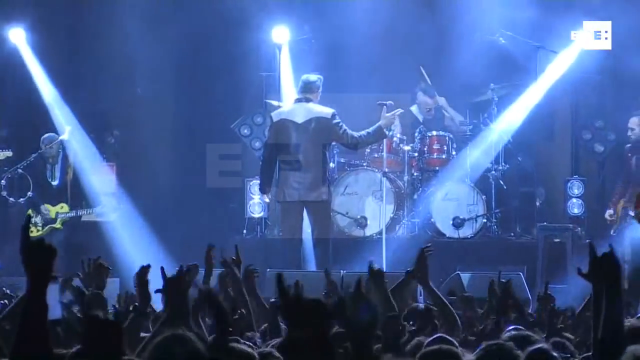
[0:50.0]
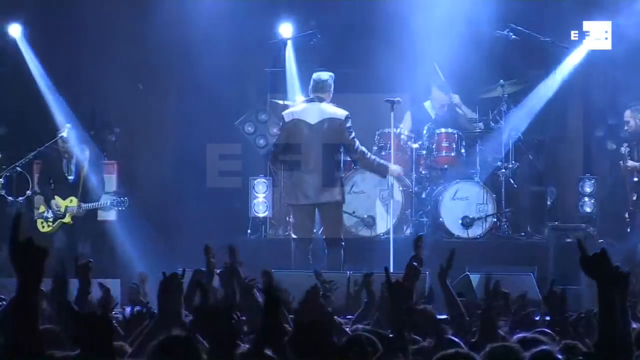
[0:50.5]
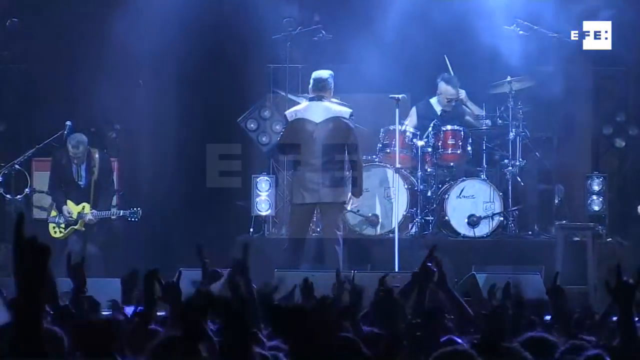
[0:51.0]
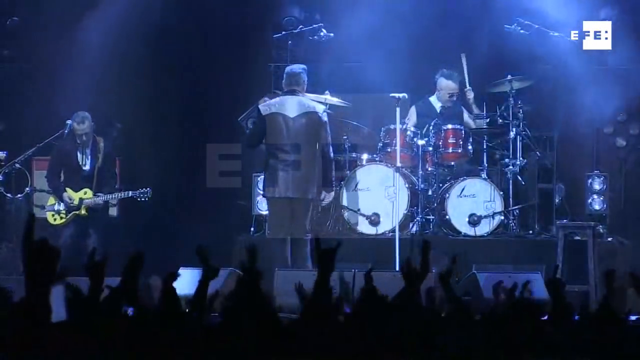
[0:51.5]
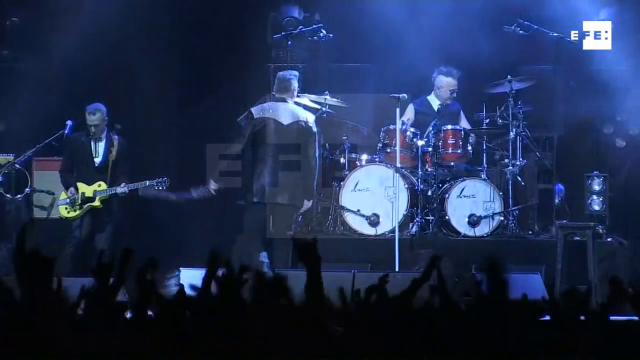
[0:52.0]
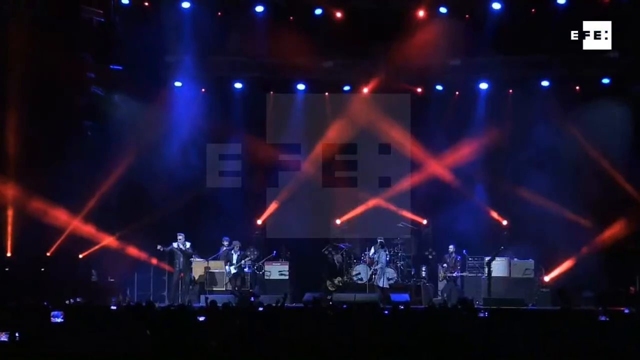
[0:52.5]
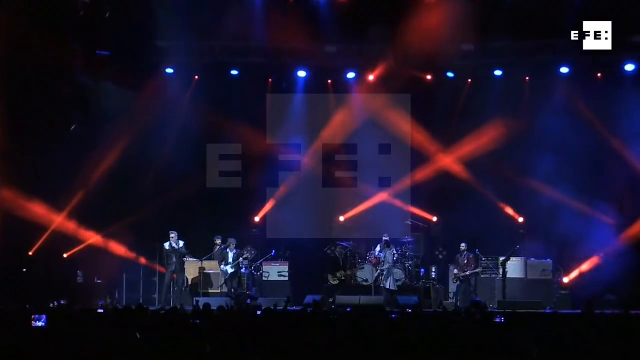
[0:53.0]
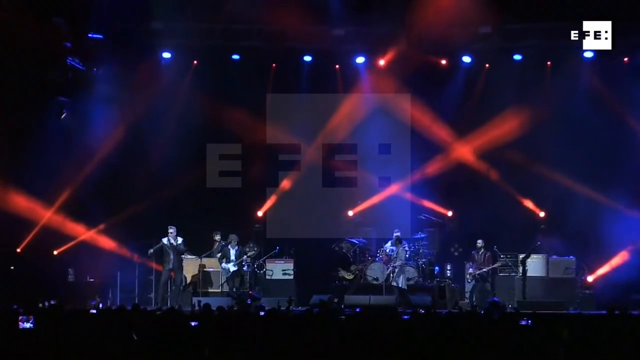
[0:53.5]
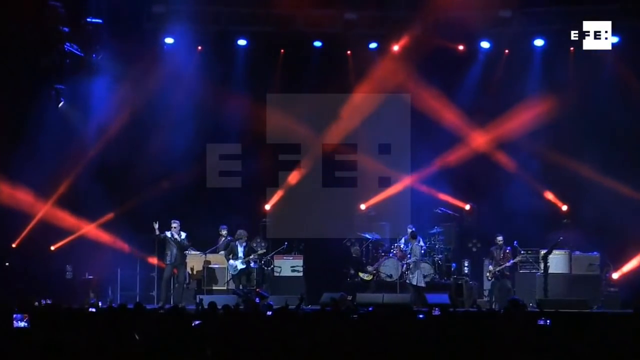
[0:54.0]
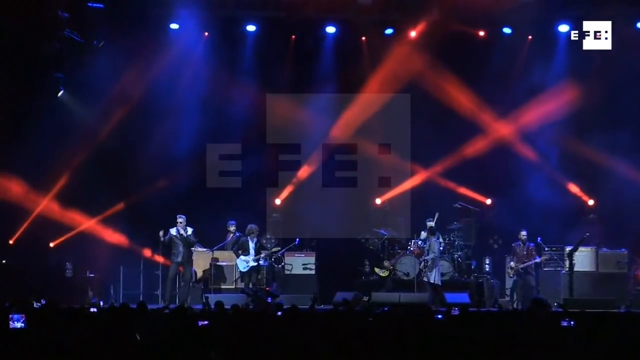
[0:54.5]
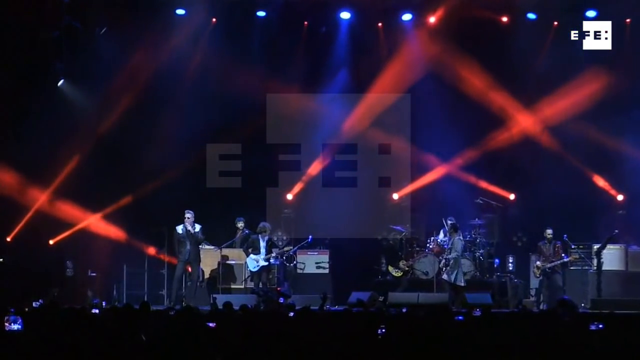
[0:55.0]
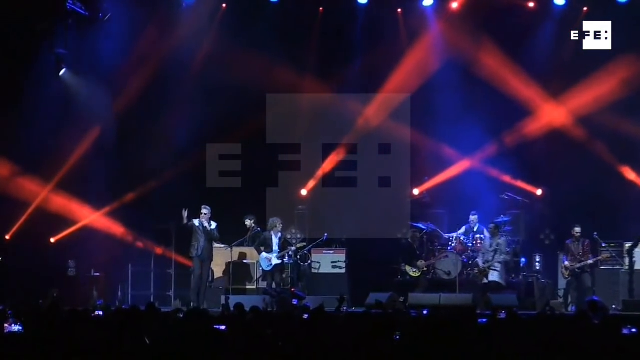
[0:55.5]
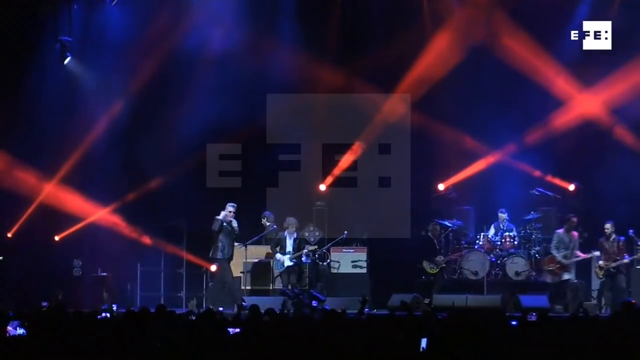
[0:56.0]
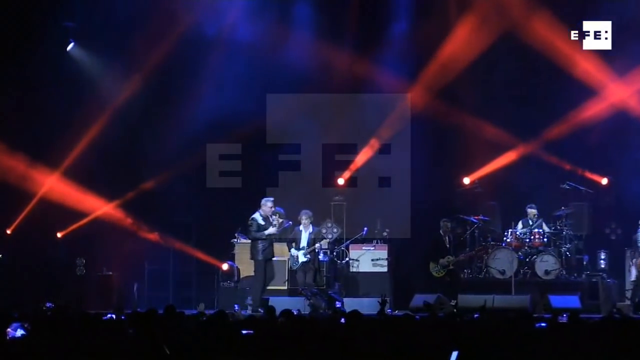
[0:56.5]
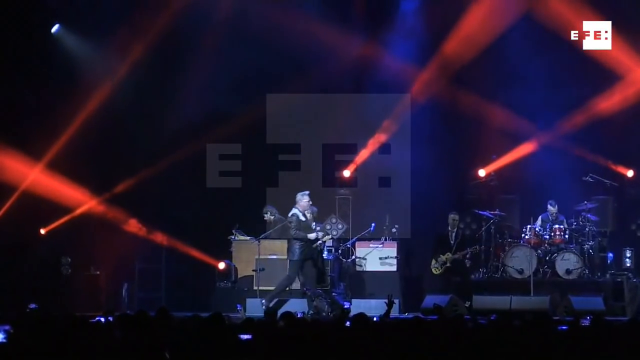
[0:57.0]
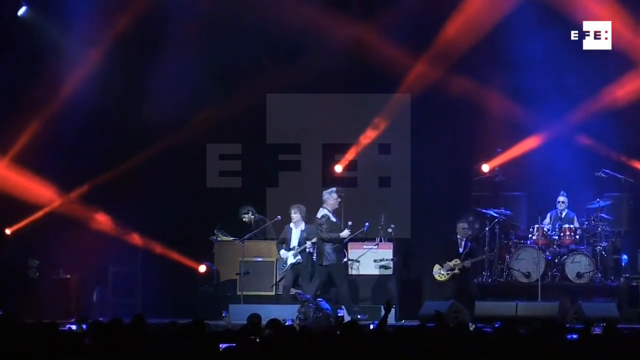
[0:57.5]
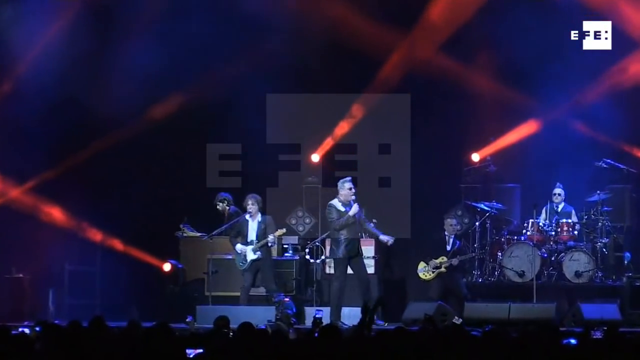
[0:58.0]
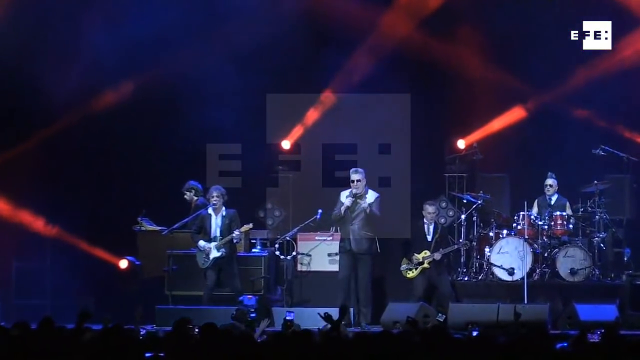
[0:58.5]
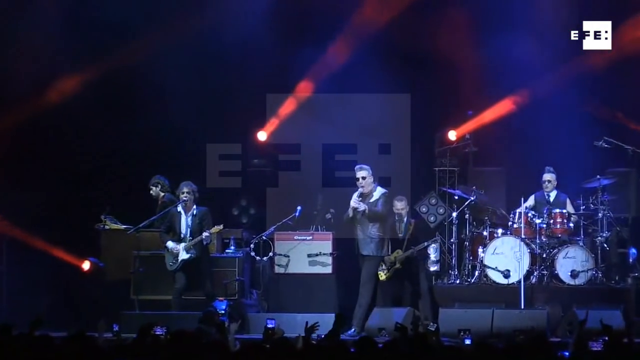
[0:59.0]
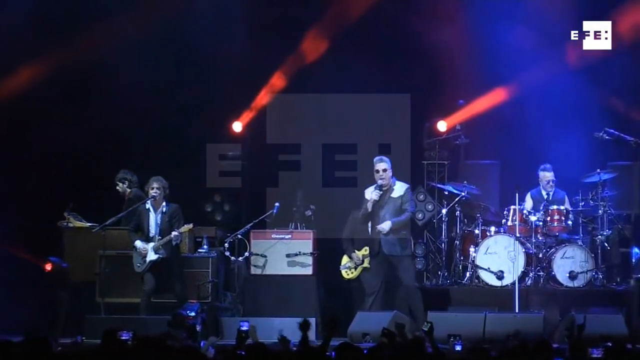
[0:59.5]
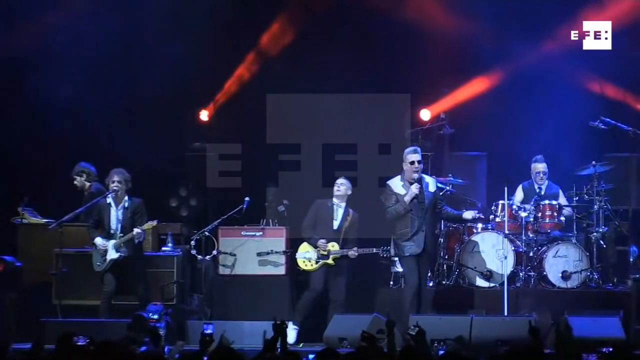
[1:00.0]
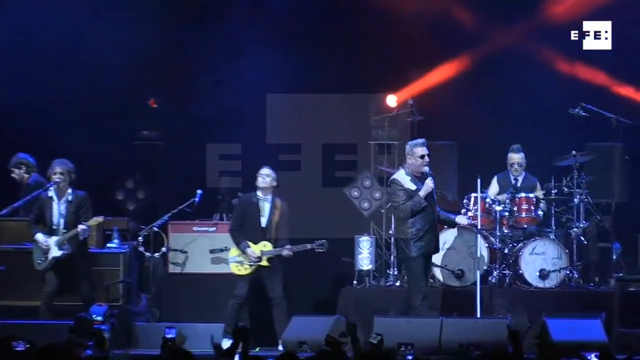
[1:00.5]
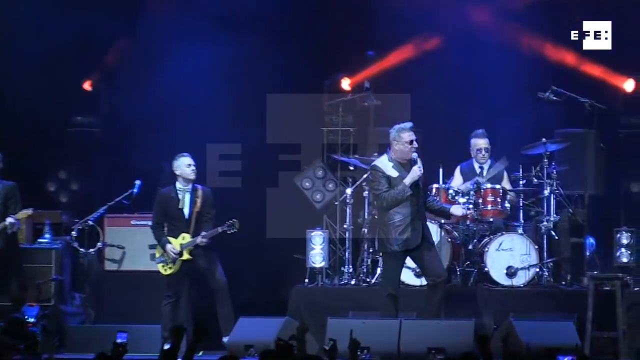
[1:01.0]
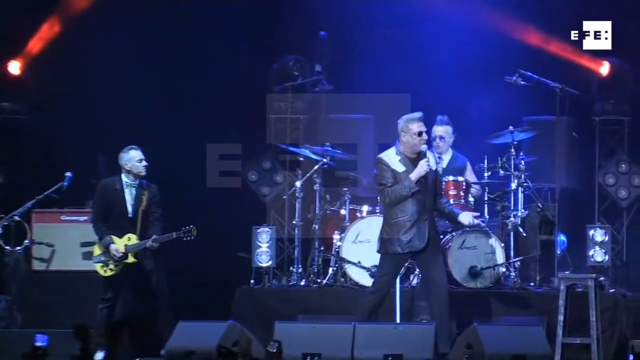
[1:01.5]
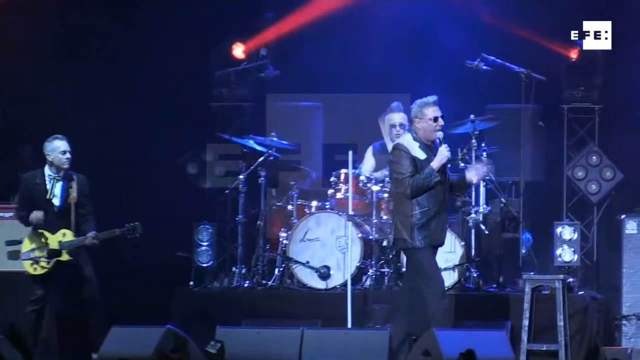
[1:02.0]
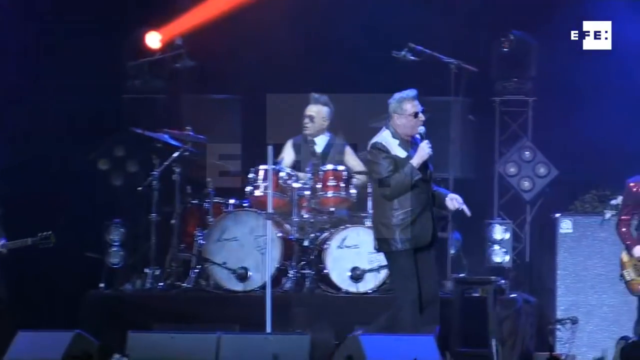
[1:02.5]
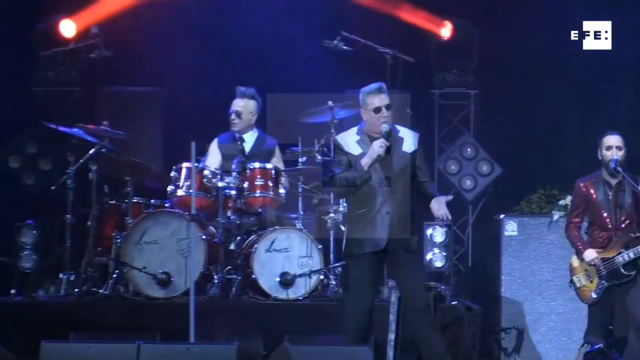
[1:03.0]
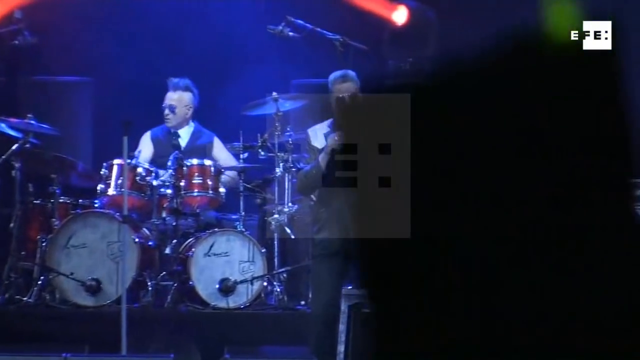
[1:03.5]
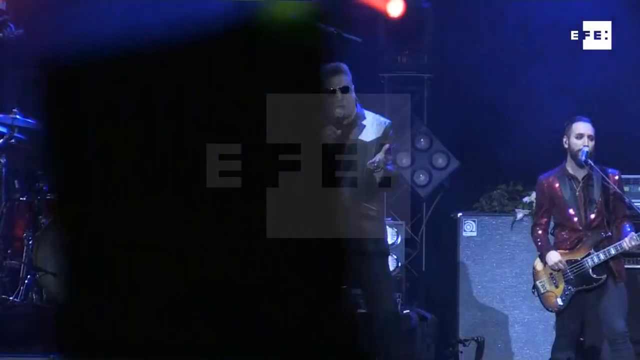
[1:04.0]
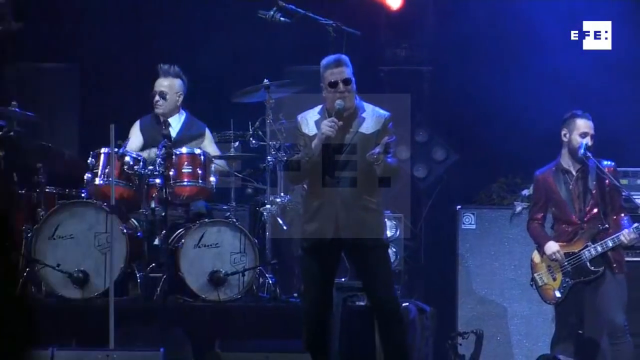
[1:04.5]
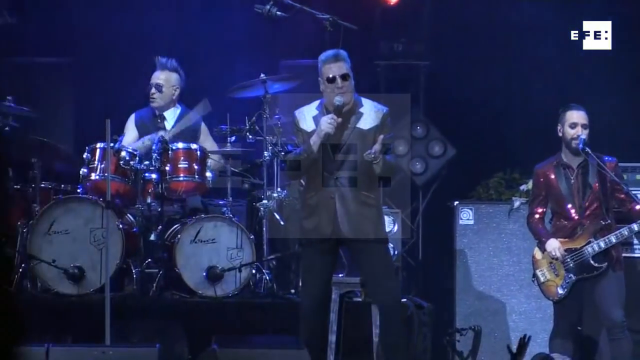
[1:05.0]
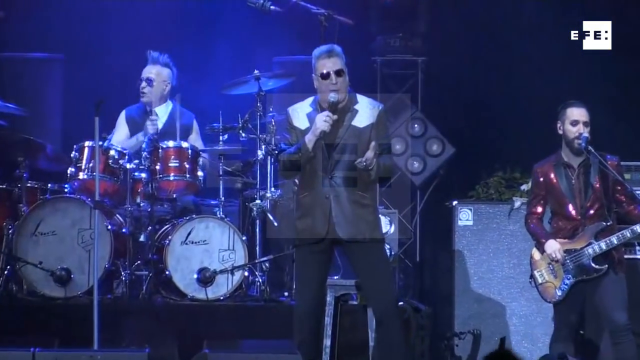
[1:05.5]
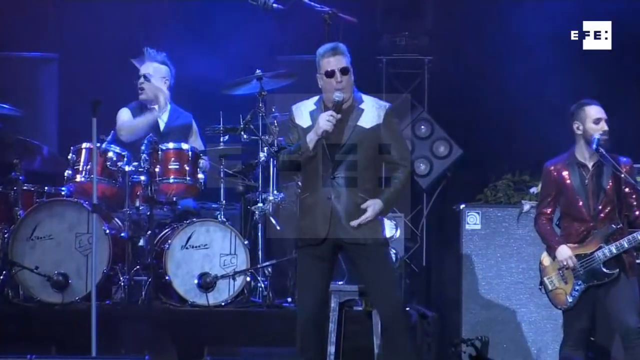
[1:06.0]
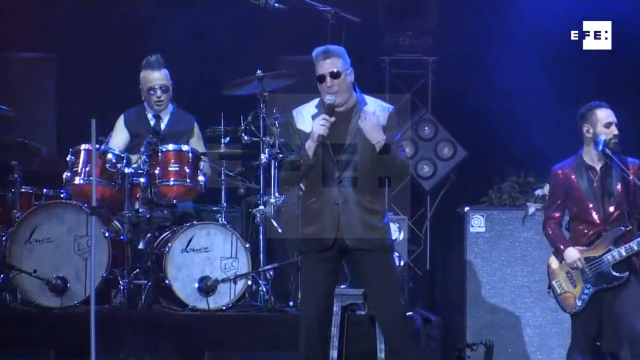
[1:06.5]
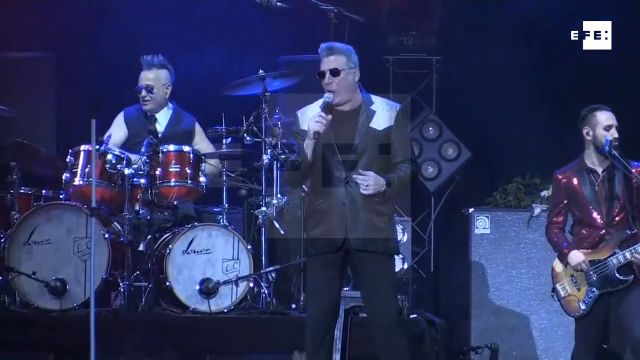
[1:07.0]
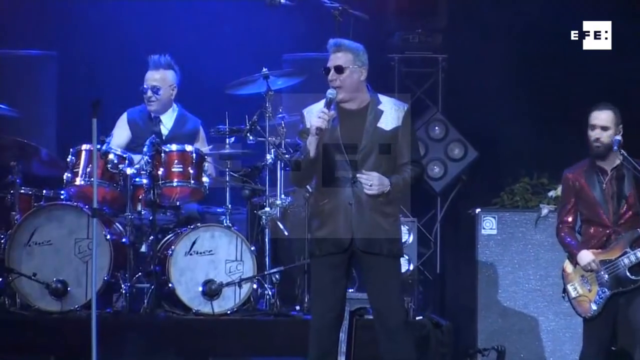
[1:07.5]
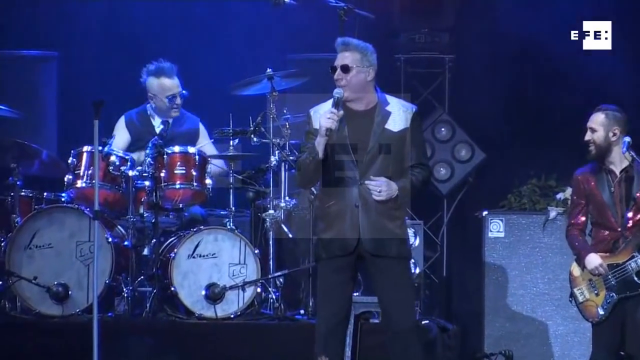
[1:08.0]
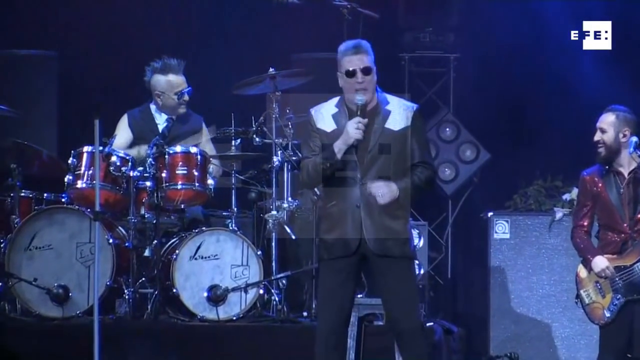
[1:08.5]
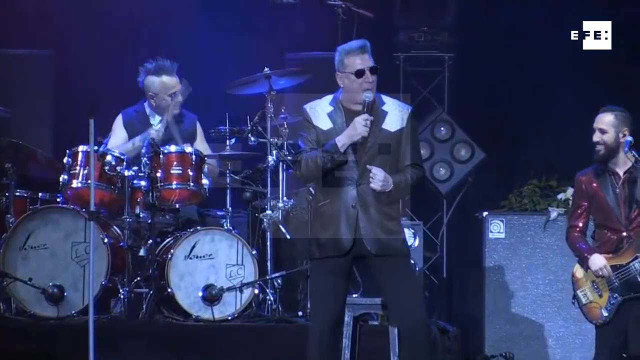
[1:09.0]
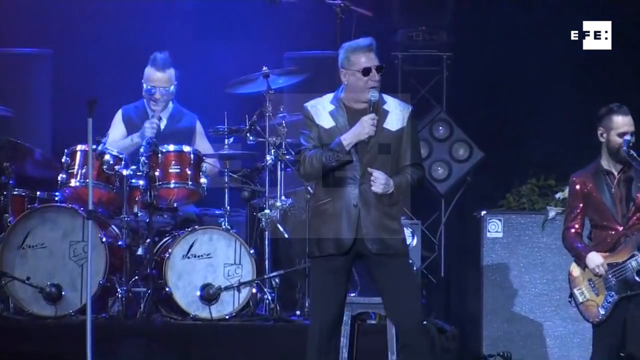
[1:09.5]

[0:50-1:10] In the middle of the stage is a drum set on a small black platform. The man behind it wears a white shirt with a black vest over it, dark sunglasses, and has spiky hair. To his right, a man facing to his right plays a brown piano, apparently with a keyboard stand also set up in front of him. A man facing the camera wears a white button-up shirt with the buttons undone and a black suit jacket, and plays a black and white guitar. To his left on stage, a man in a white collared shirt and black jacket plays a yellow guitar. A man walks from the left side of the stage to the right side, wearing a black suit jacket with white shoulder pads on the outside and black pants; his hair is spiky and he wears black sunglasses. He holds a microphone and sings into it. The backs of the heads of people at the front of the audience are visible. When he reaches the right side of the stage, another man appears, wearing a sparkly red suit jacket, singing into a microphone and playing a brown and black bass guitar.